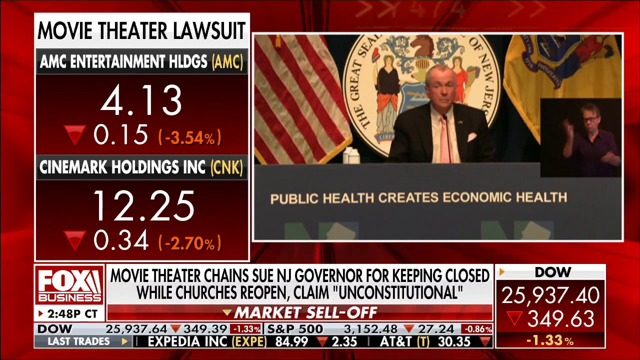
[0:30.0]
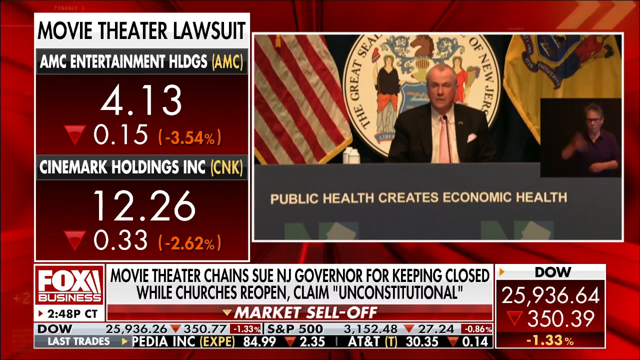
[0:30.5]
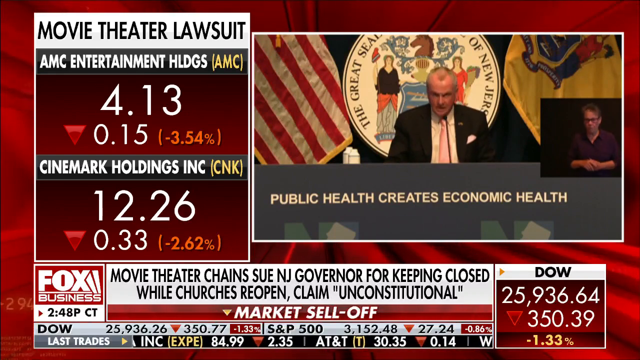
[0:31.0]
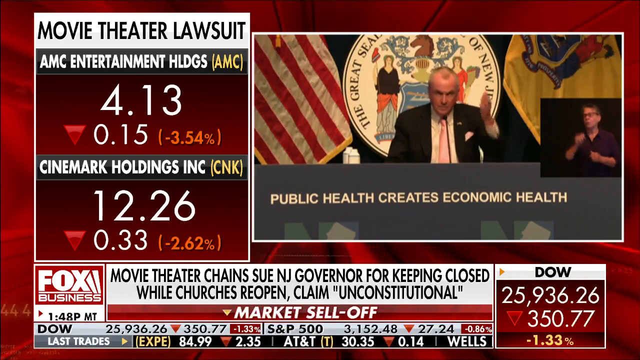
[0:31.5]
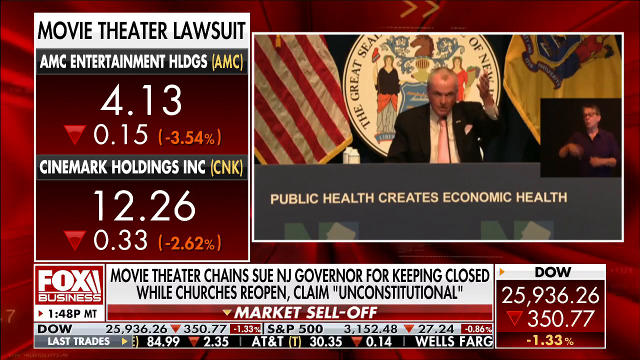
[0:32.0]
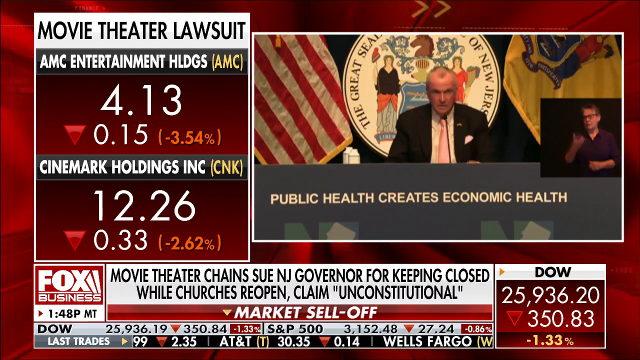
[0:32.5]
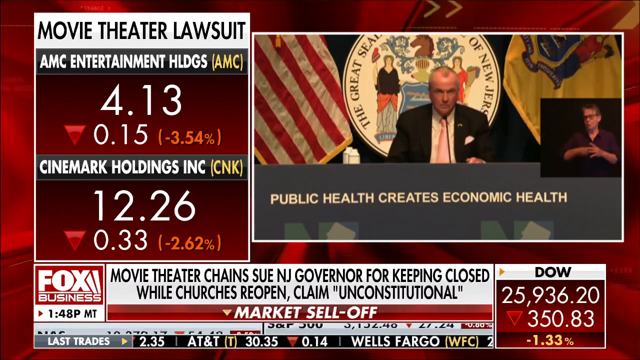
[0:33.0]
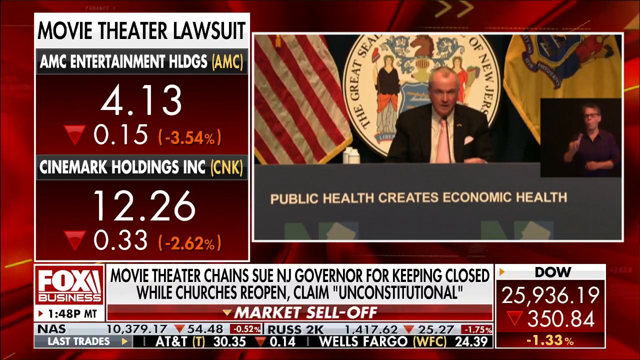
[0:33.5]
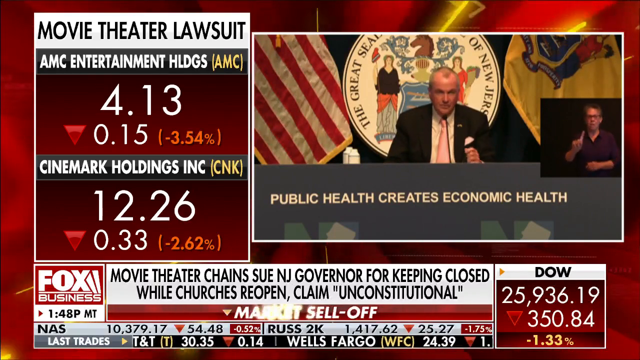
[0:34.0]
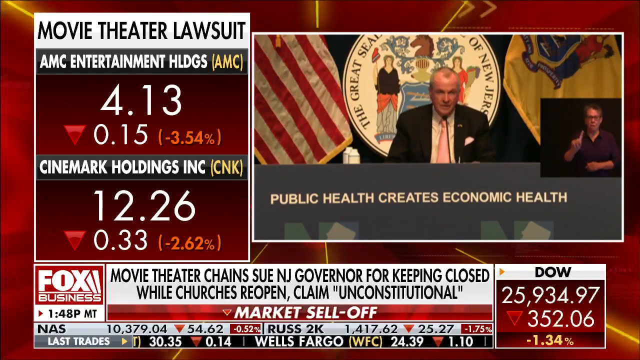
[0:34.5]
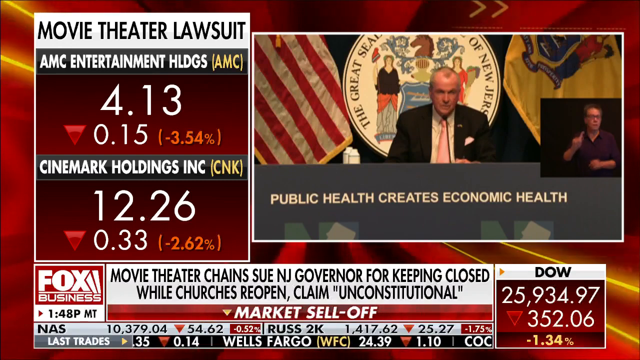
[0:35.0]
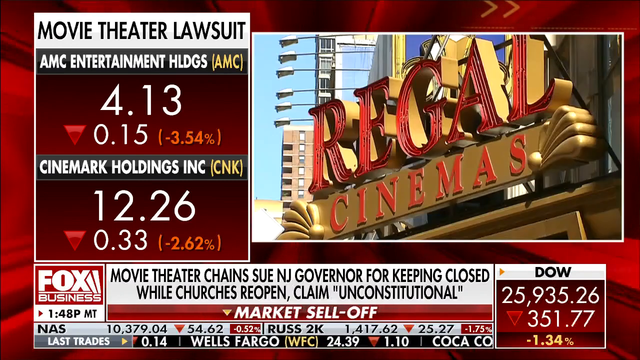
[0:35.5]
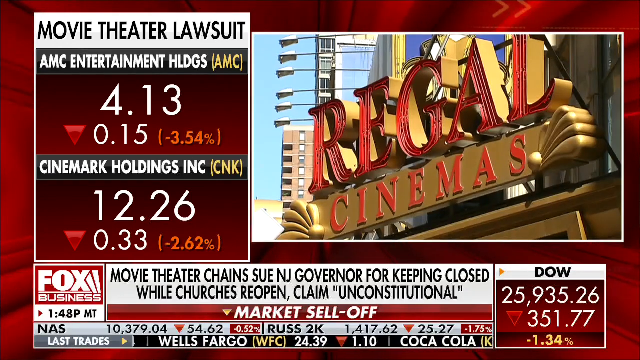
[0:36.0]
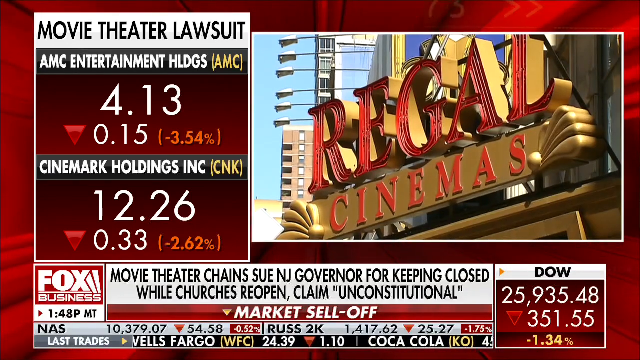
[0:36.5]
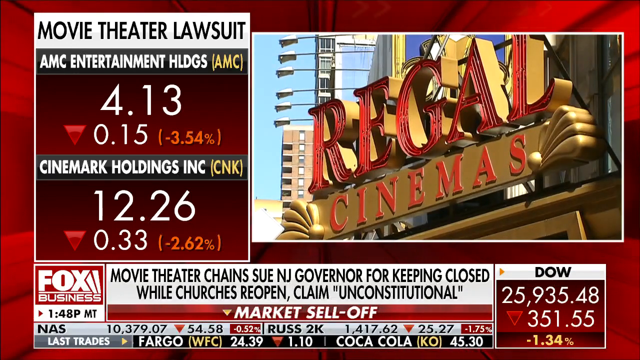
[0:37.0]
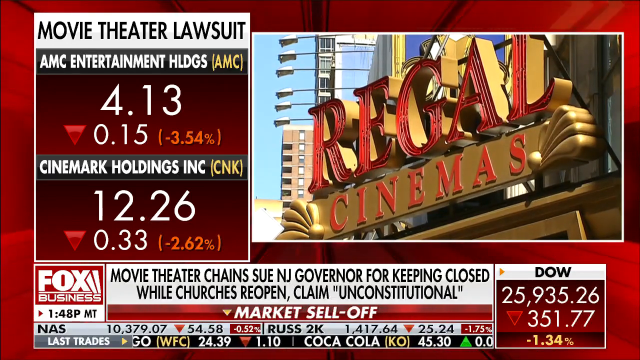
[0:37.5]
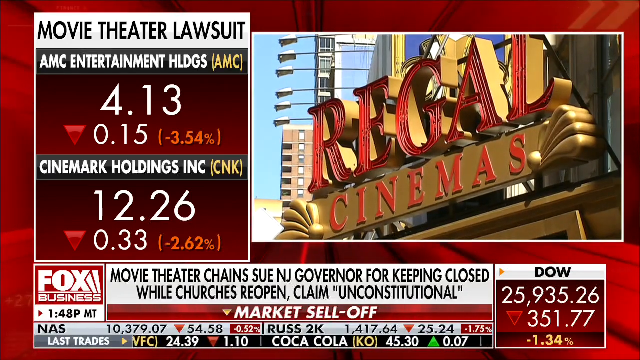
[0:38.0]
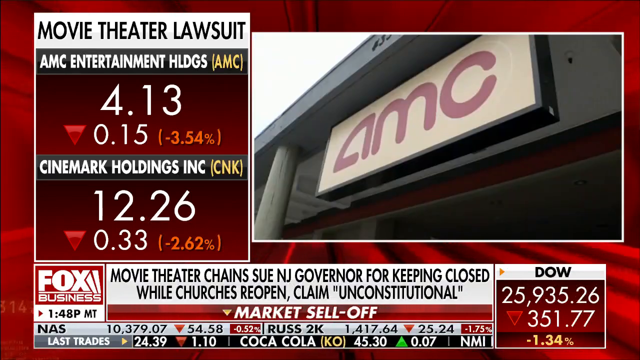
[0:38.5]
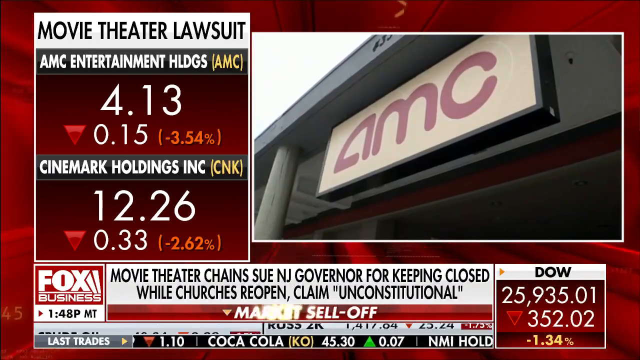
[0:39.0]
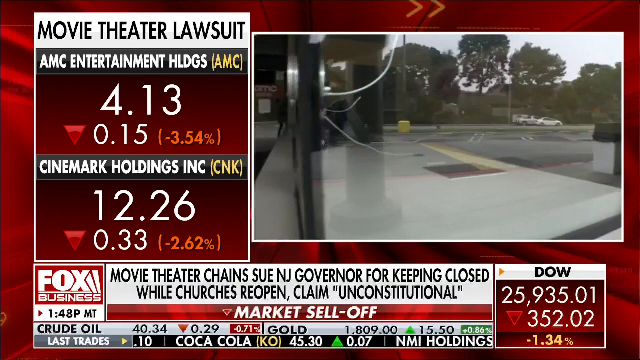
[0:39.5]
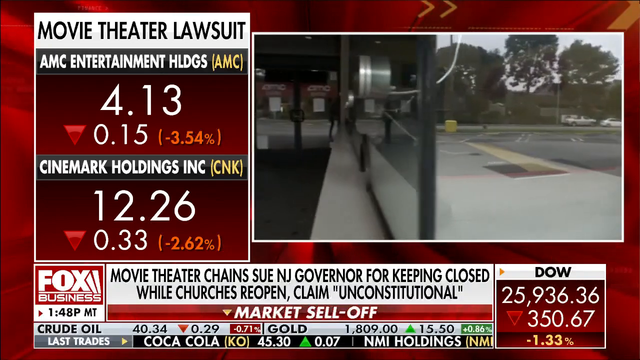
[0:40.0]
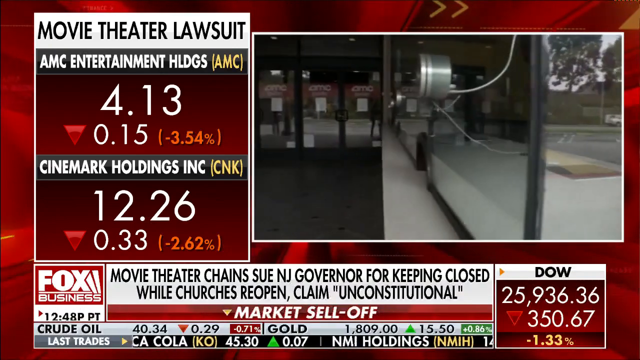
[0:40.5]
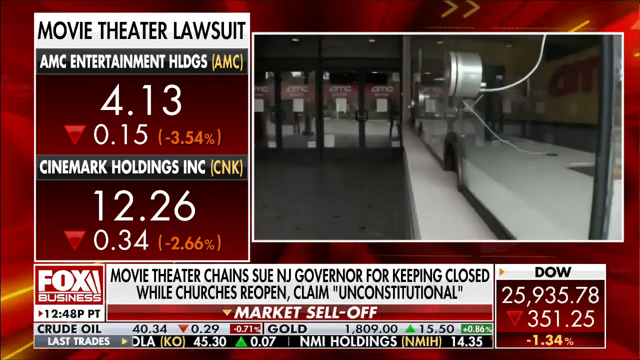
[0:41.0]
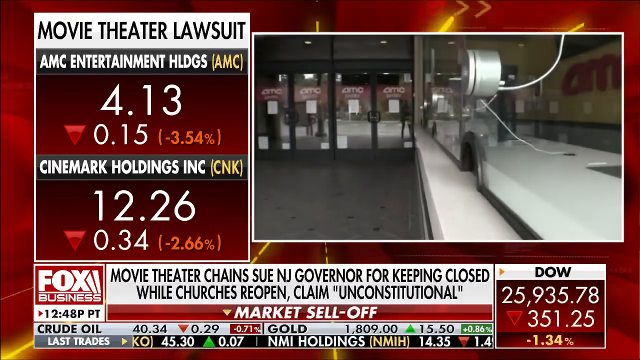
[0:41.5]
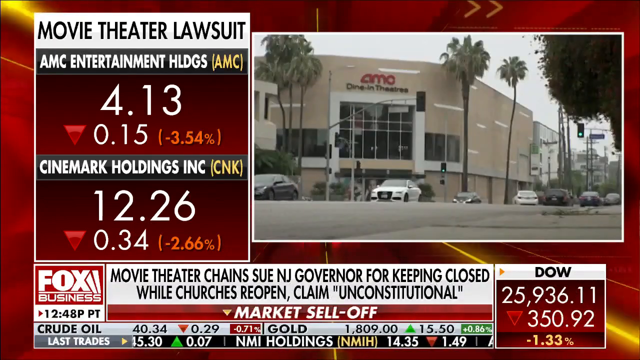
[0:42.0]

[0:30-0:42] The "Movie theater lawsuit" graphic is shown again with two movie theater companies, AMC Entertainment and Cinemark Holdings. At the very bottom are "Fox Business" and the headline "Movie theater chains sue NJ Governor for keeping closed while churches reopen, claim unconstitutional". A video clip shows a man who is possibly the NJ Governor, with the caption "Public health creates economic health", and a man translating in sign language; an emblem is in the background. Videos and clips of different cinemas follow, including Regal Cinemas and AMC, a view inside a cinema, and a building with AMC on it.